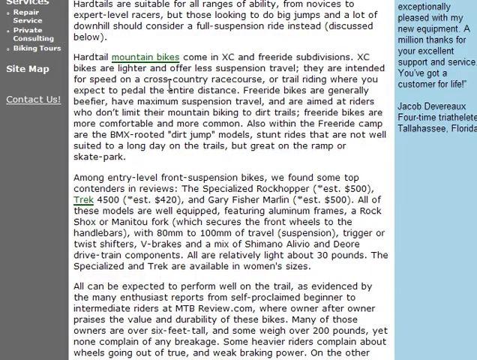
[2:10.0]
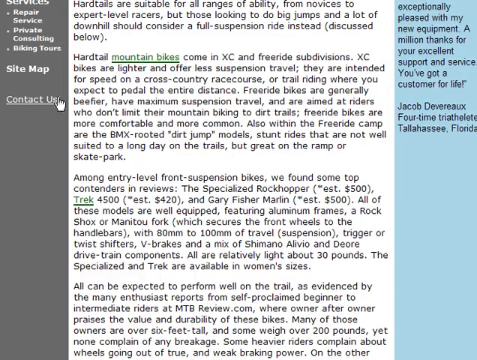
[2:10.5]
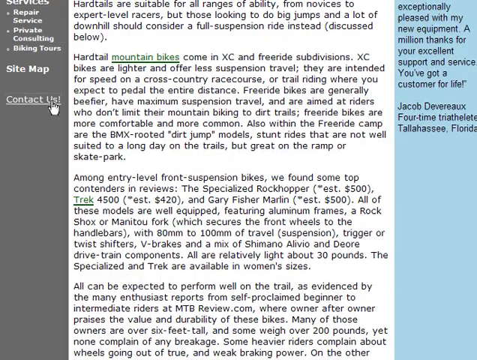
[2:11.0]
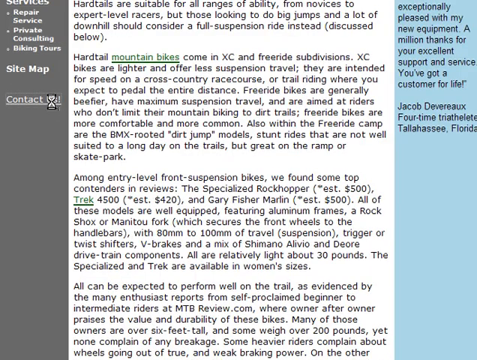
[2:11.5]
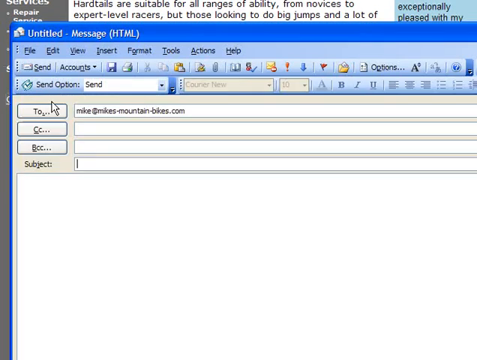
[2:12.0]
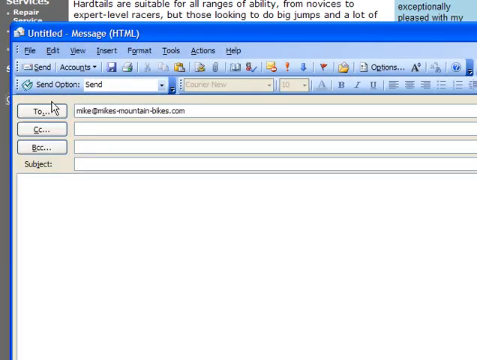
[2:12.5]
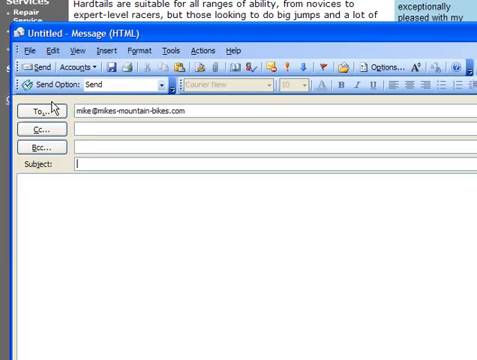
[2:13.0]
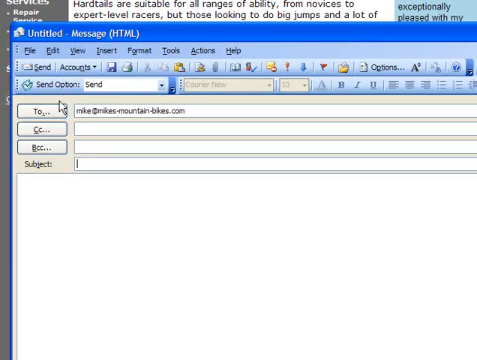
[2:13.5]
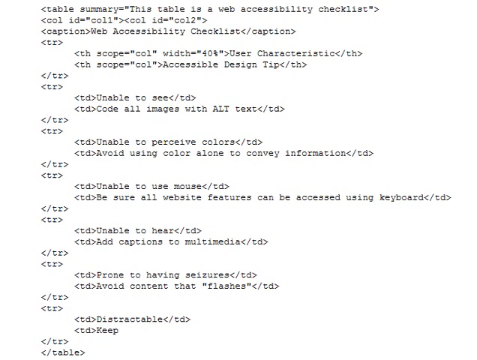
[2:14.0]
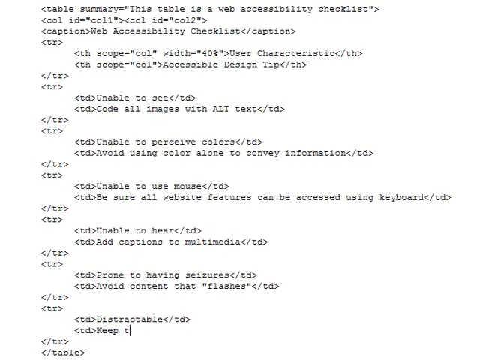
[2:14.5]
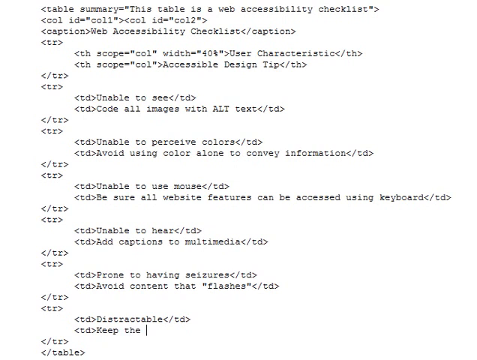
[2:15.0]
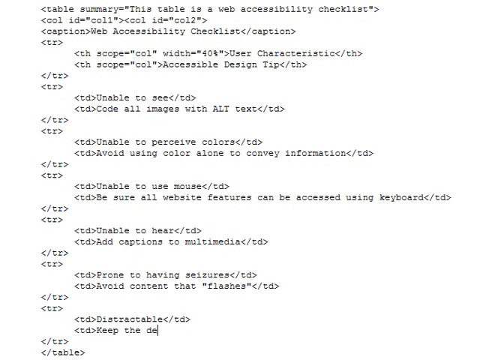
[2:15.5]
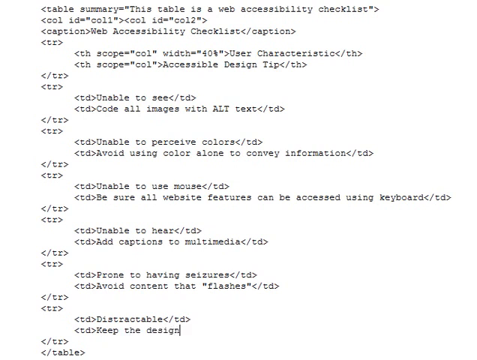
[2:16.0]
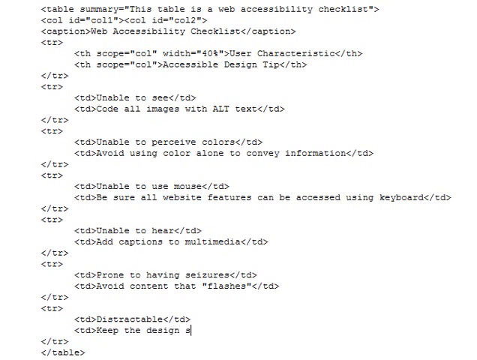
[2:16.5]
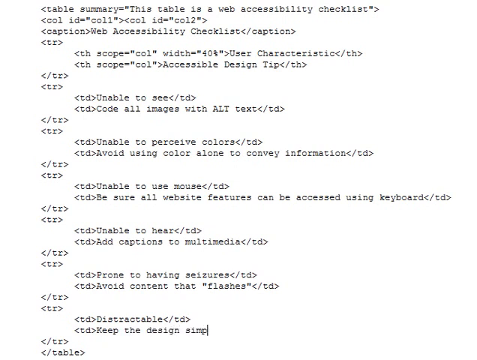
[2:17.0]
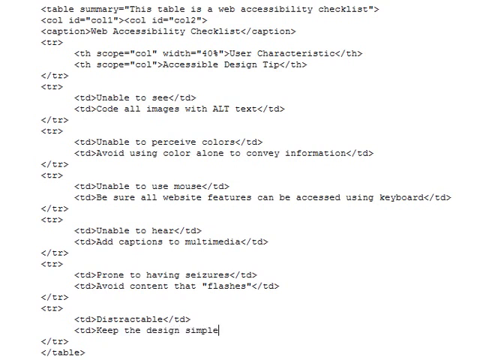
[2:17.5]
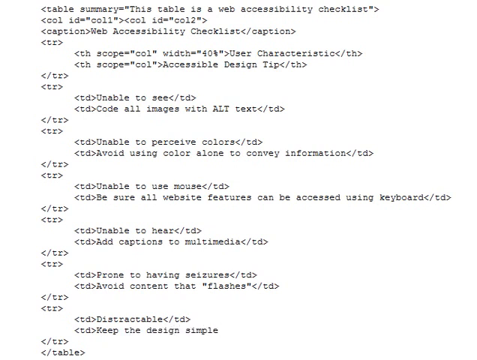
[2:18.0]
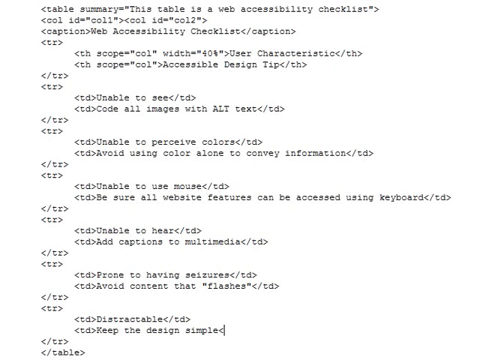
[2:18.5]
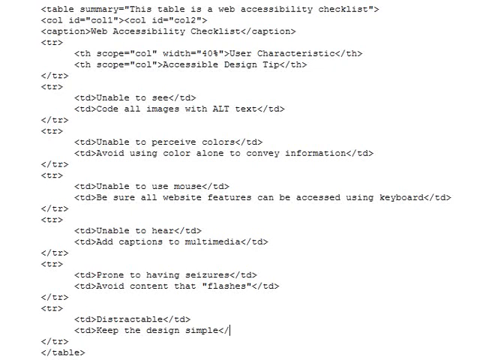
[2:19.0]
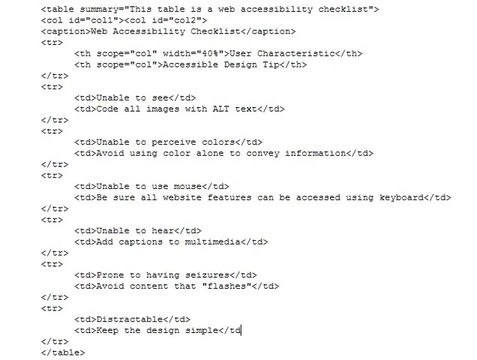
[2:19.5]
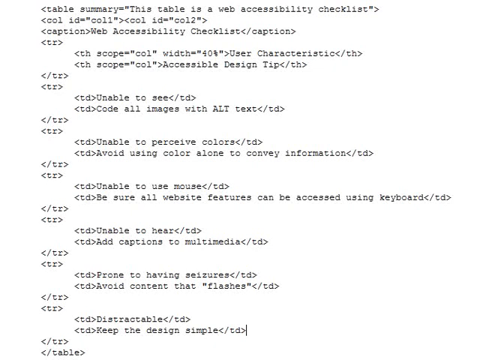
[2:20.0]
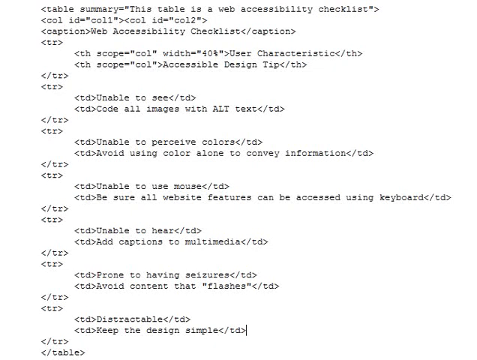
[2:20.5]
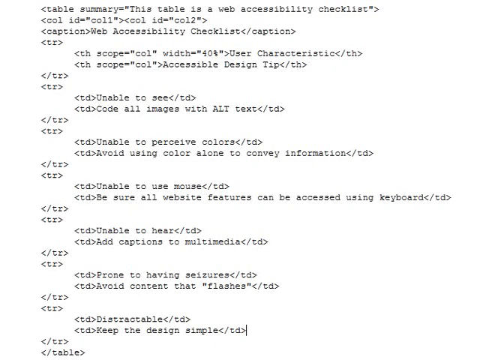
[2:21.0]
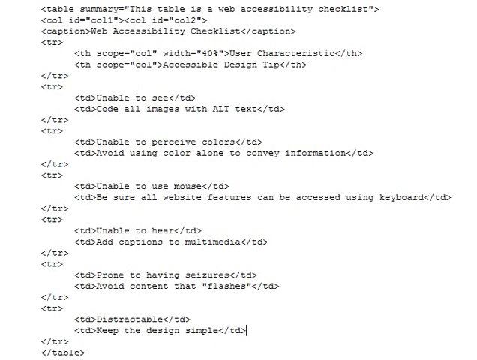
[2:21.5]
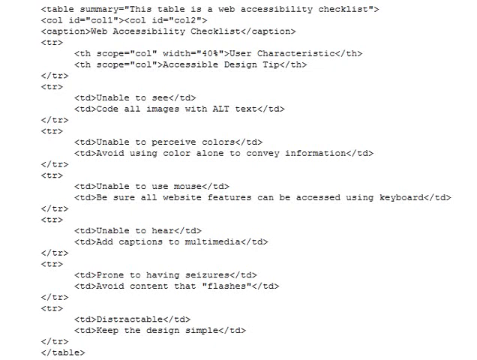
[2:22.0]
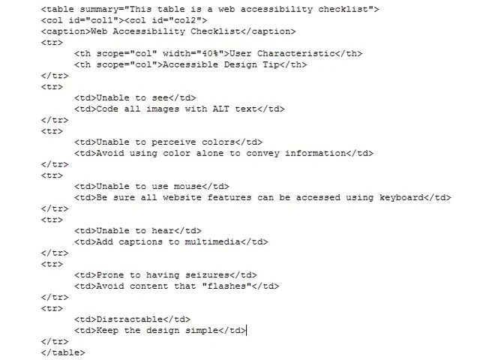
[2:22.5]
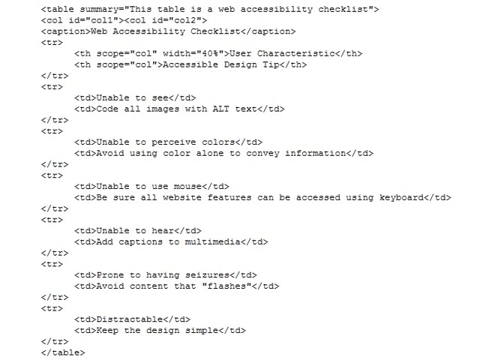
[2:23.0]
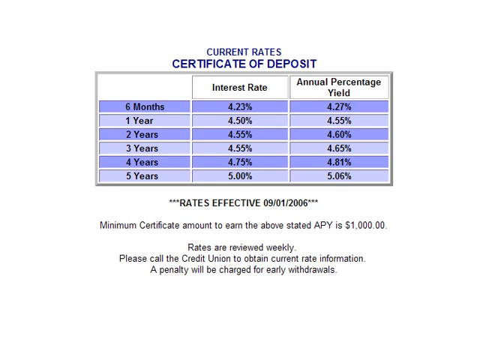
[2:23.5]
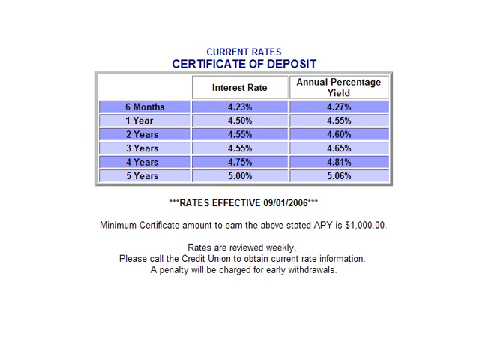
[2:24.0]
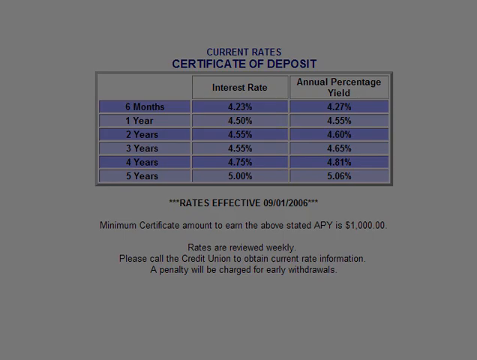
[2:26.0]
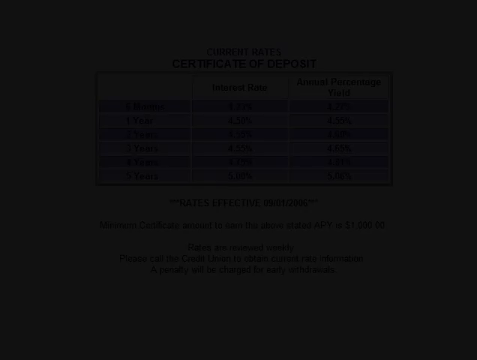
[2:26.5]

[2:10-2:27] Mountain bikes are being looked at on a page about hardtails, which reads in part "Hardtails are suitable for all ranges of ability" and "hardtail mountain bikes come in XC and free ride subdivisions. XC bikes are lighter and offer less suspension travel." It also reads "Freeride bikes are generally beefier, have maximum suspension travel, and are aimed at riders who don't limit their mountain biking to dirt trails." The contact link is then clicked. A code page with a lot of text follows, including "keep the design simple", and something is typed in. Finally, apparently a page of current rates for a certificate of deposit appears, ranging from 4.2 to 5% for six months to five years.